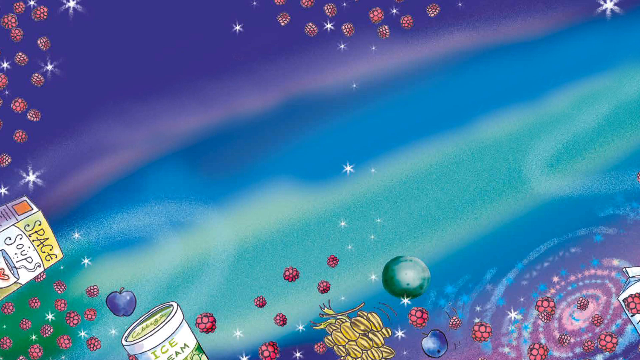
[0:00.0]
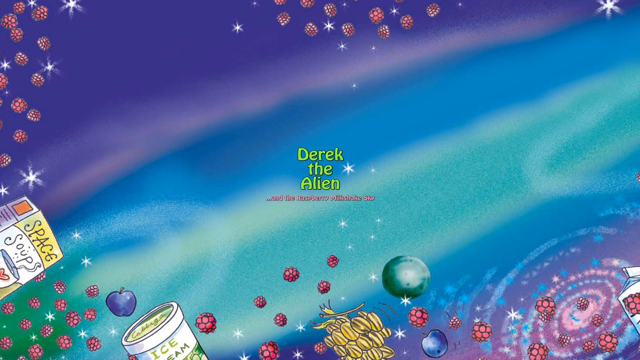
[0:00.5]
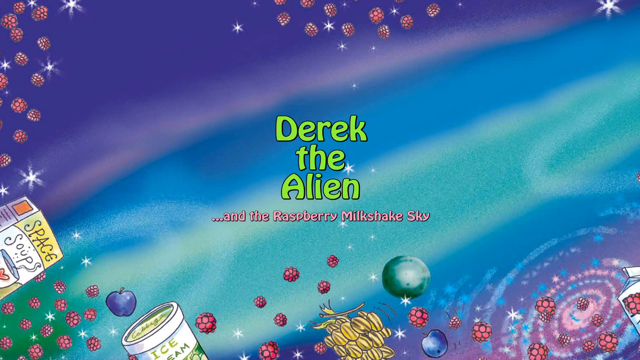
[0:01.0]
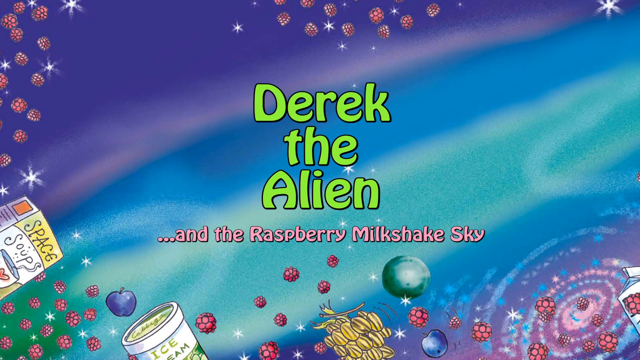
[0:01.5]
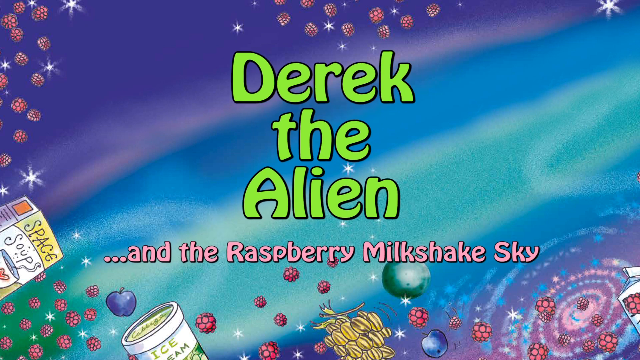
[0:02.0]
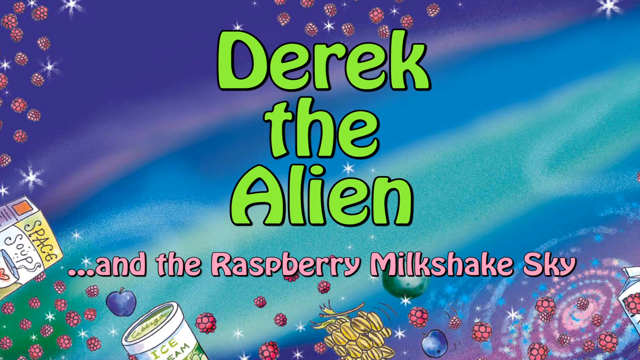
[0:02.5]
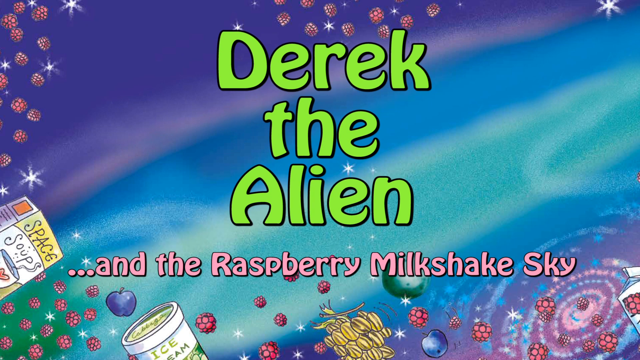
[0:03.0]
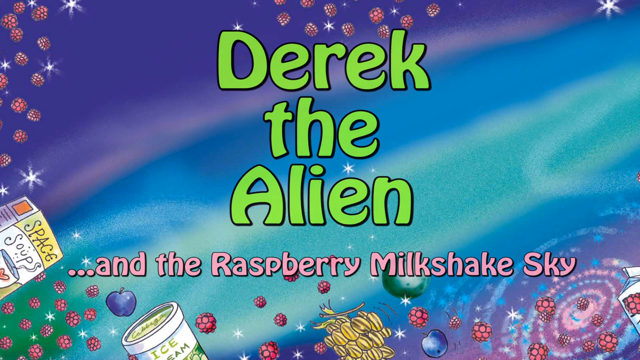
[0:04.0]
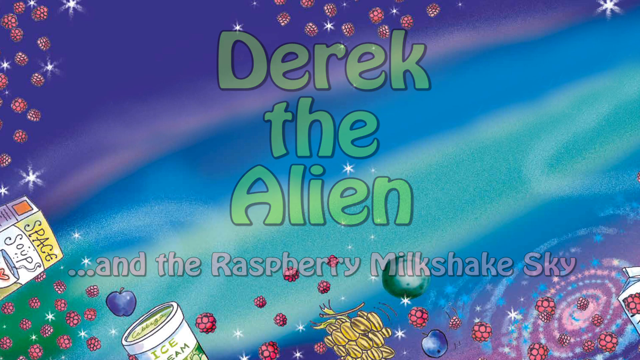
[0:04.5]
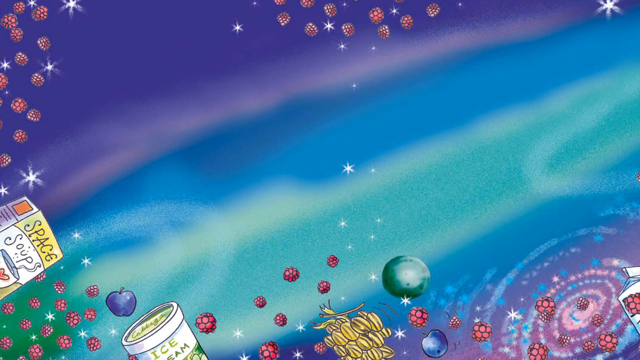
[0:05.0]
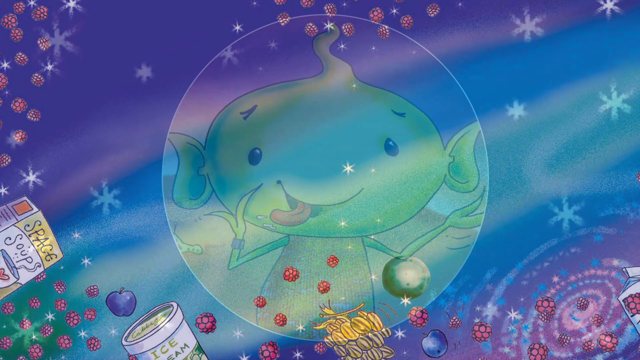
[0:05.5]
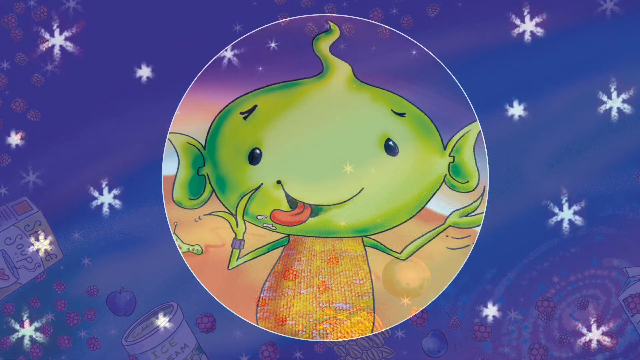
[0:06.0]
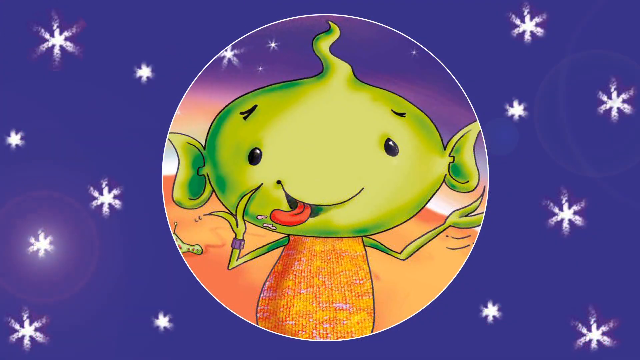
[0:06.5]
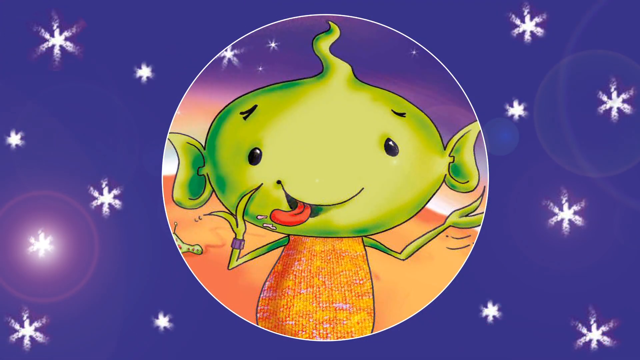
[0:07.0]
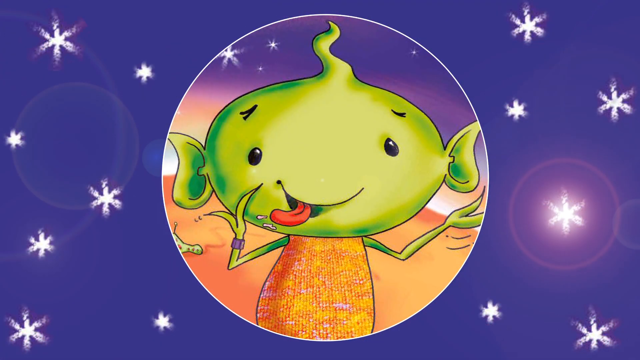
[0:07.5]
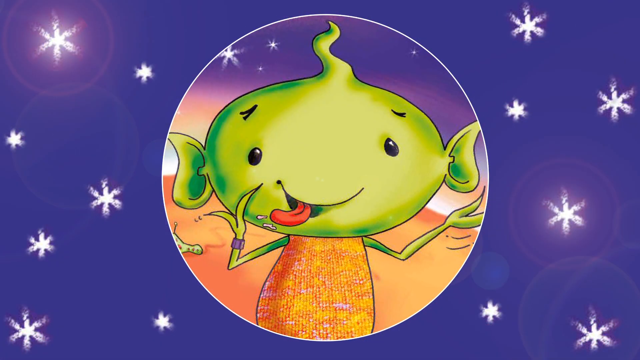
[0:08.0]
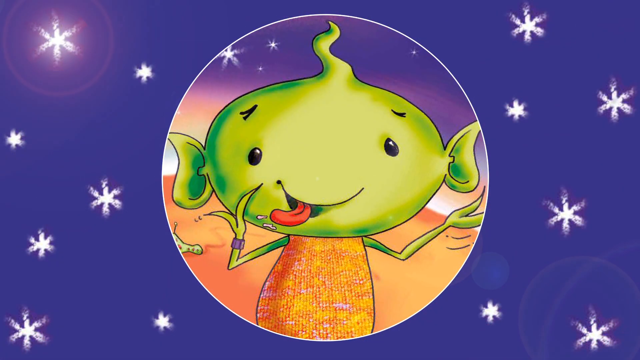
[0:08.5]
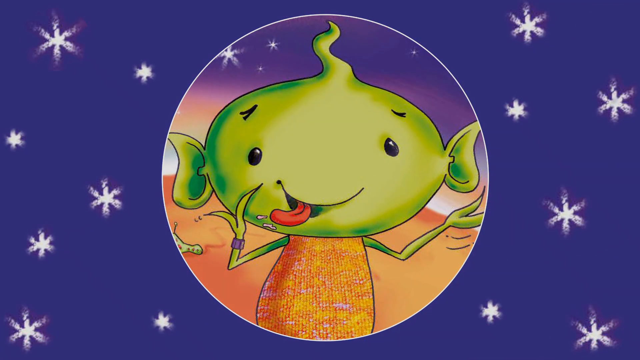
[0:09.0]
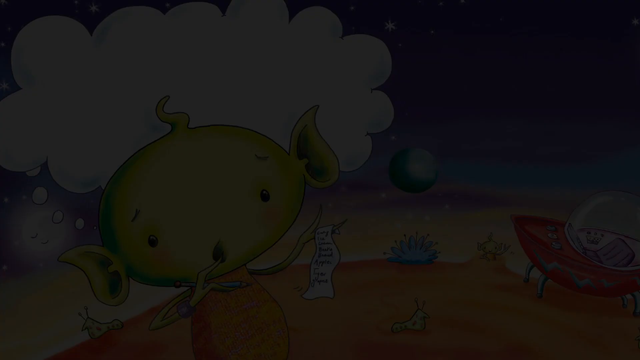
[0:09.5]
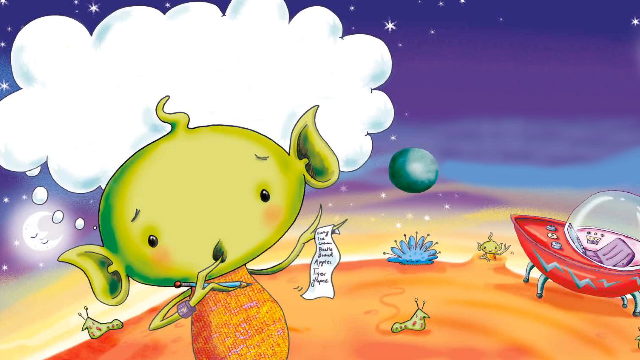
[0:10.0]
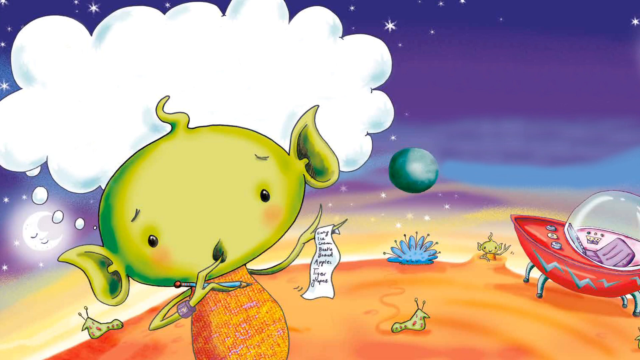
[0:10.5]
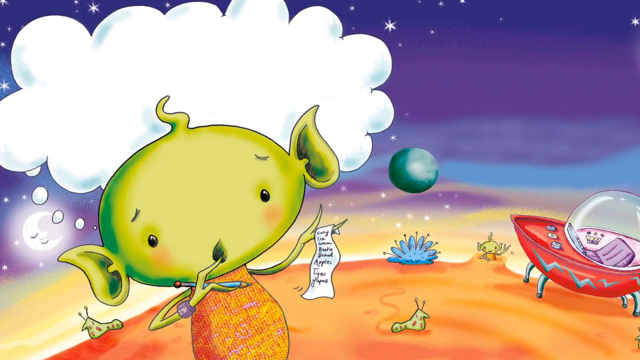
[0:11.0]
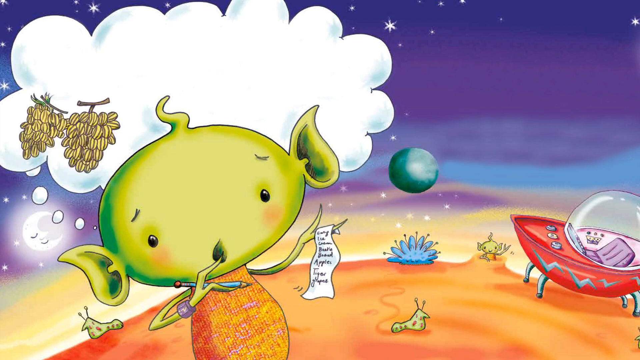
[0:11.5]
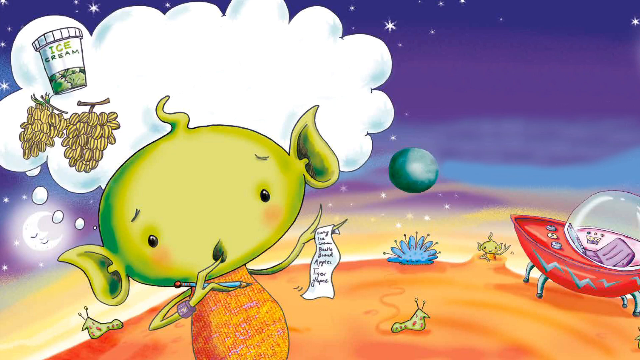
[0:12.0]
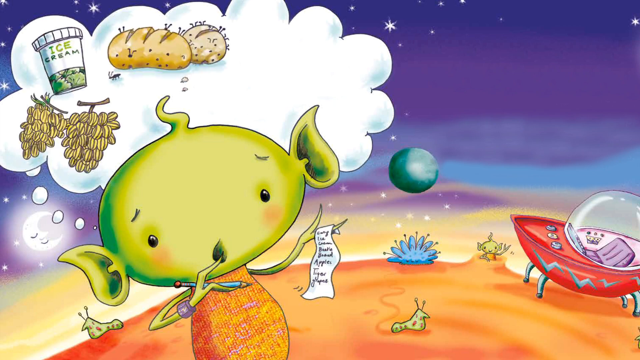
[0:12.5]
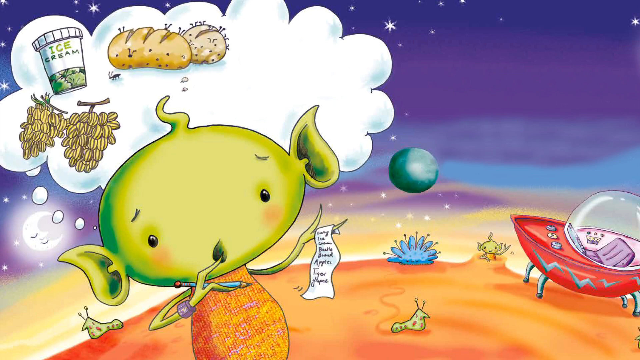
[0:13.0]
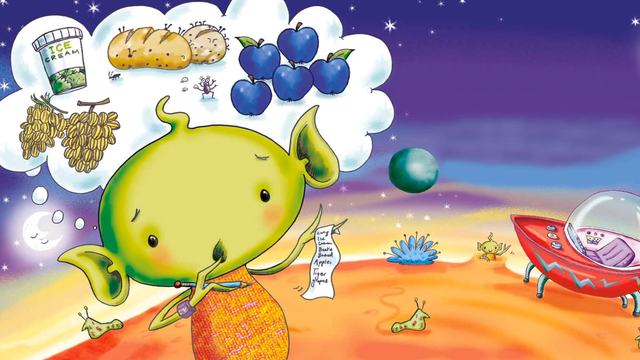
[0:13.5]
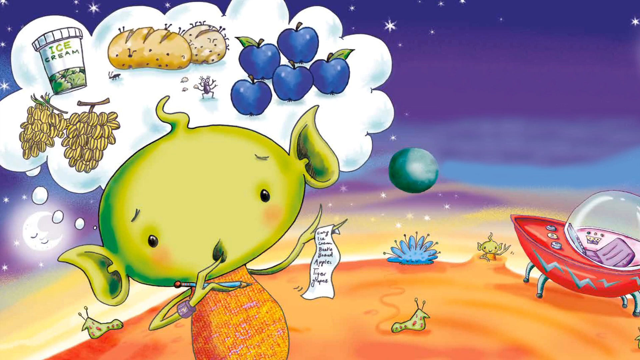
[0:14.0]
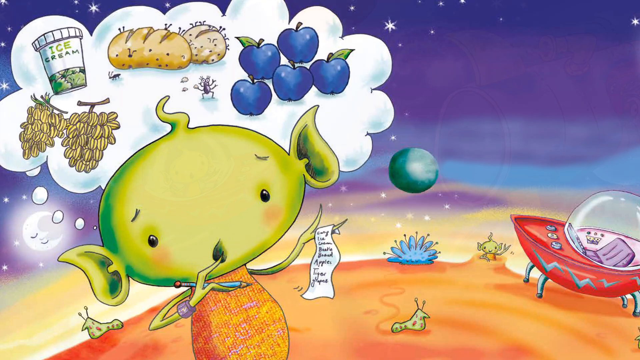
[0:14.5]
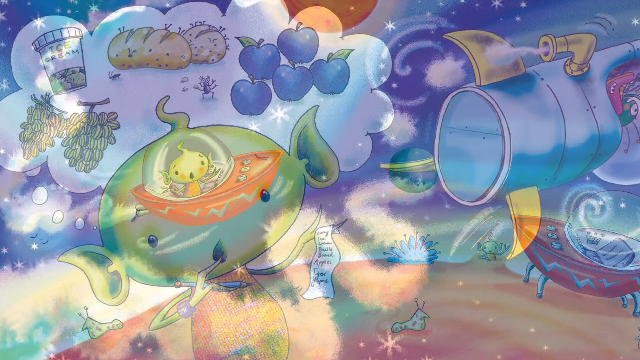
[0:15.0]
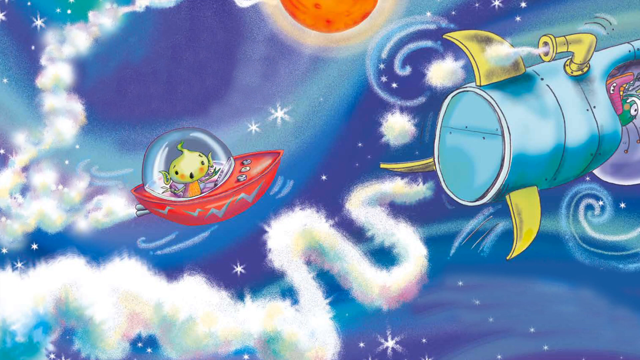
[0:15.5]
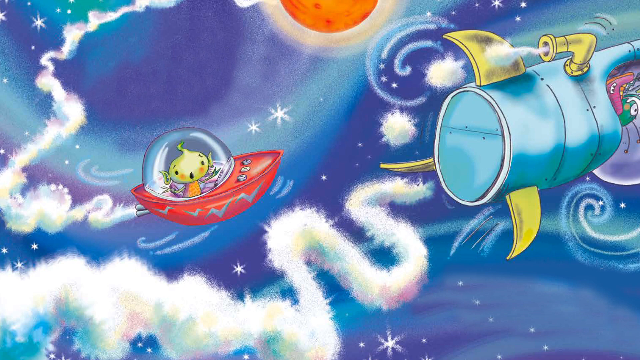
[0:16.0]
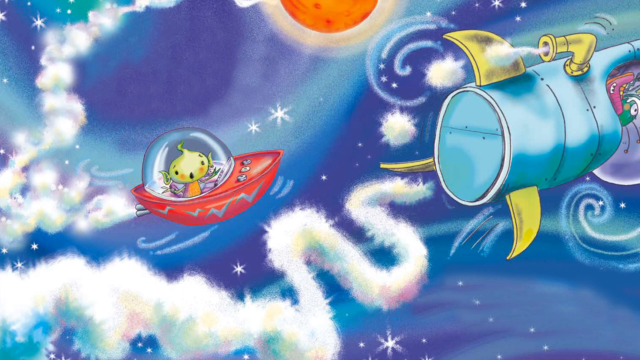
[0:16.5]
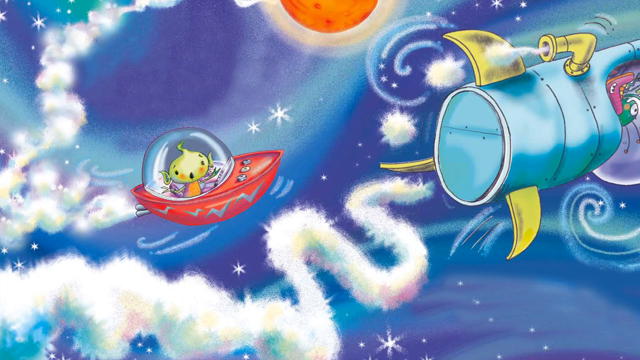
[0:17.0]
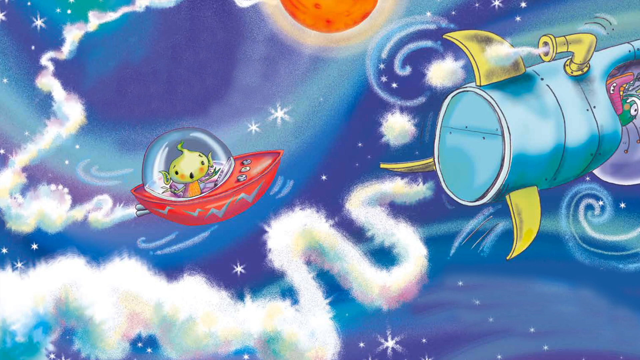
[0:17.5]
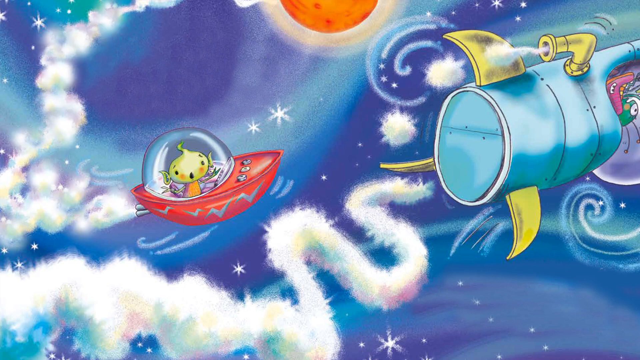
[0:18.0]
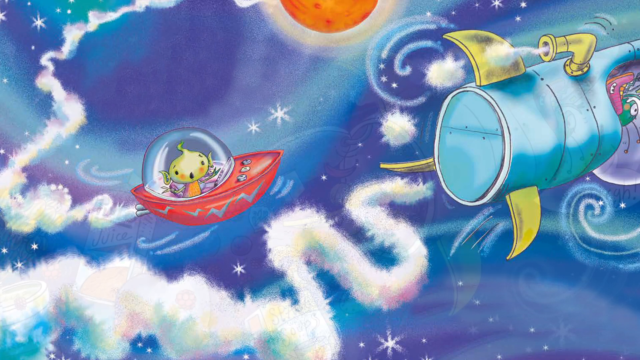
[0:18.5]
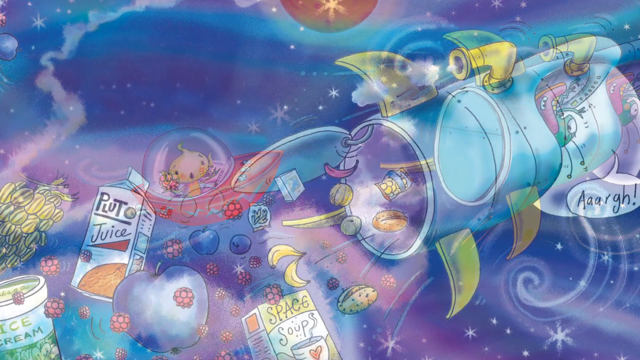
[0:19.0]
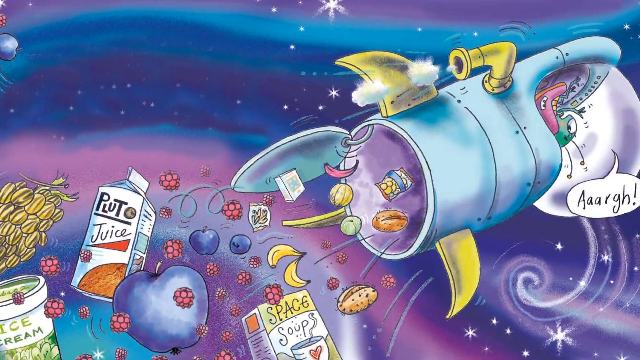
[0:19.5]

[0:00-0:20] The title of the cartoon is shown: "Derek the alien in the raspberry milkshake sky." A bubble appears with a green alien-looking figure inside it, and he seems to be thinking about food. He appears to be going through a tunnel that looks overflowed with different objects. A bubble shows the alien figure licking, with his tongue out. The scene changes to a fat cloud of him thinking about different foods. He is then shown in a boat-like vehicle, and next to him a tunnel looks like it has exploded with food, though not really exploding; it is more as if it got overstuffed with food, the lid popped open and different food items flew out.